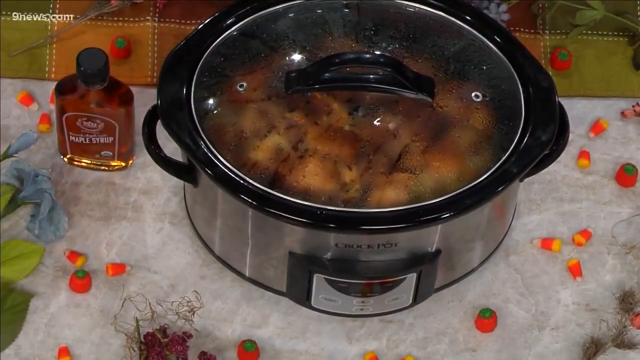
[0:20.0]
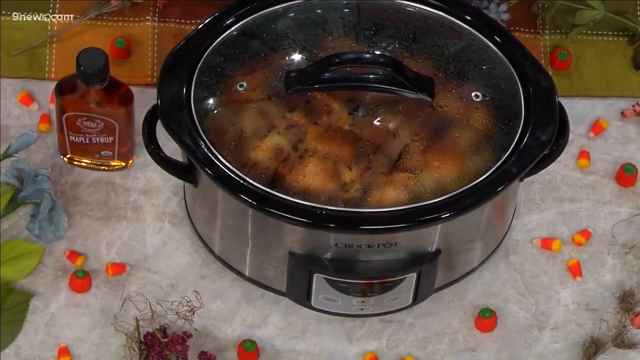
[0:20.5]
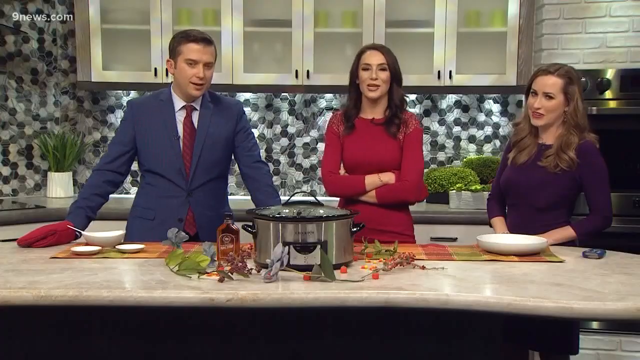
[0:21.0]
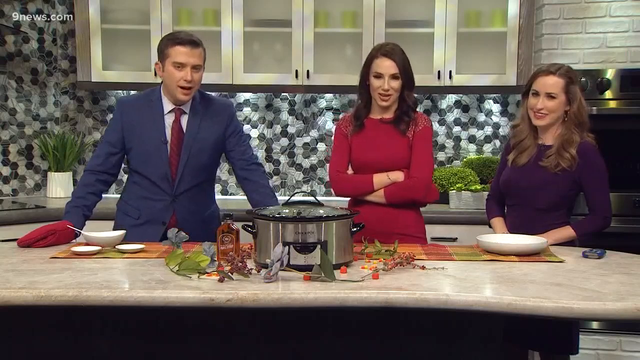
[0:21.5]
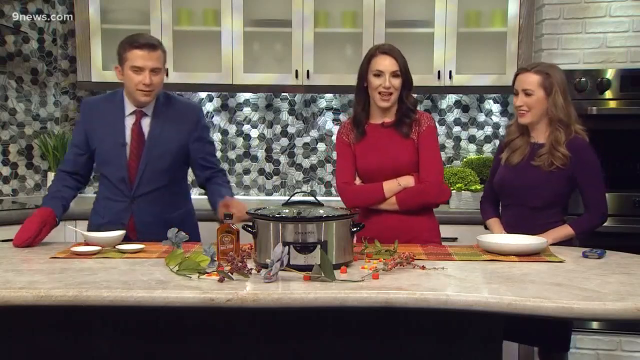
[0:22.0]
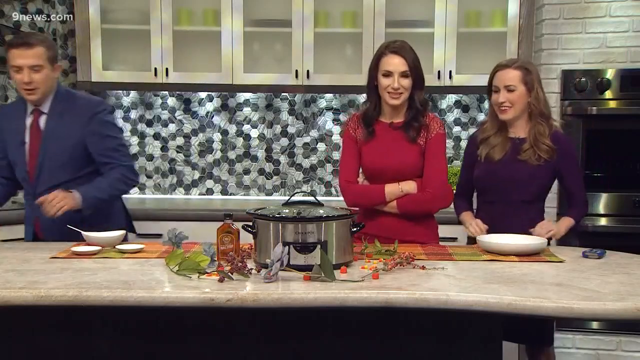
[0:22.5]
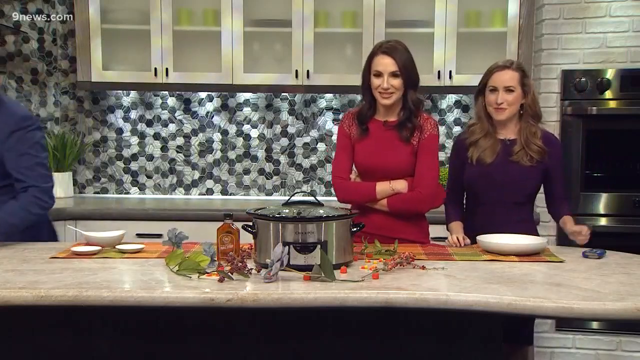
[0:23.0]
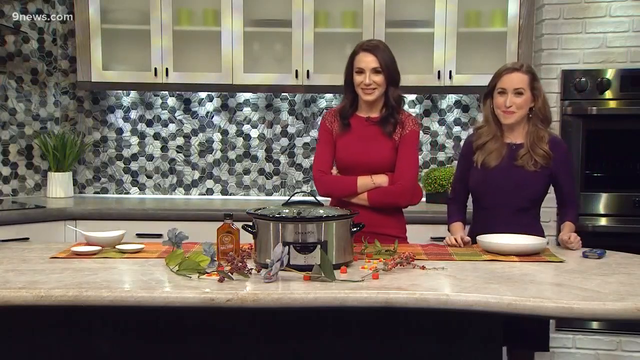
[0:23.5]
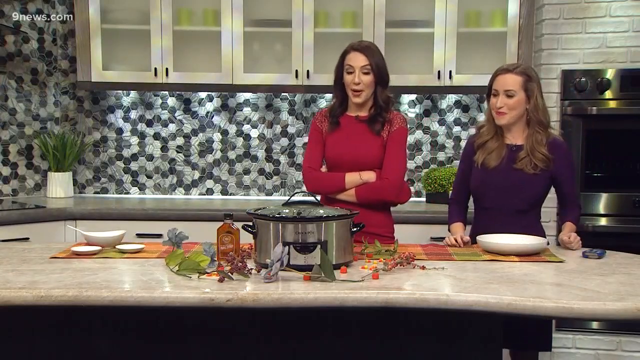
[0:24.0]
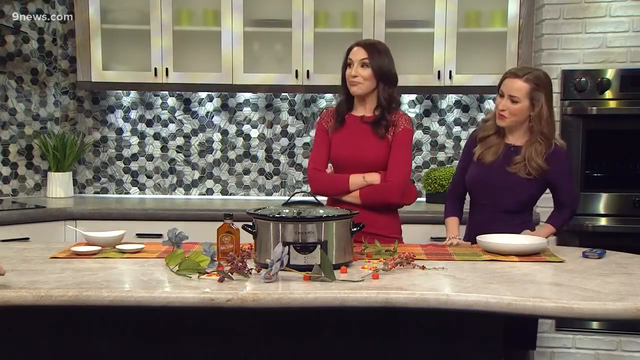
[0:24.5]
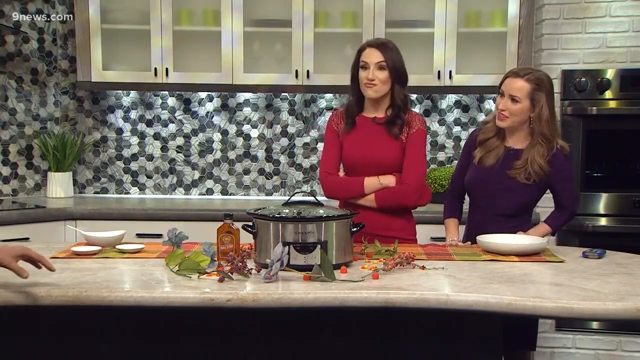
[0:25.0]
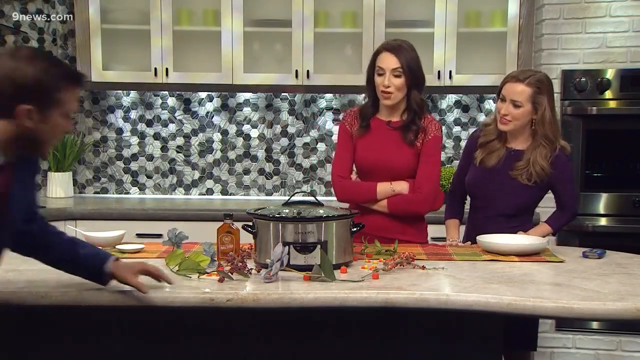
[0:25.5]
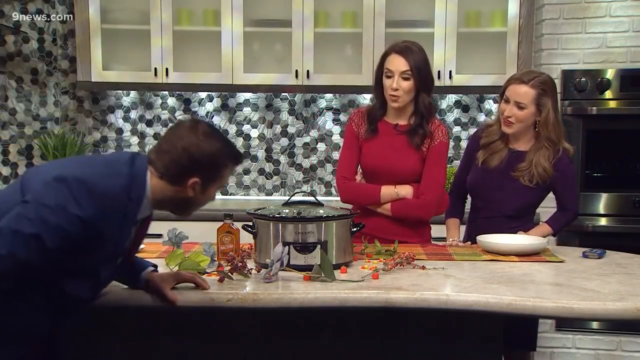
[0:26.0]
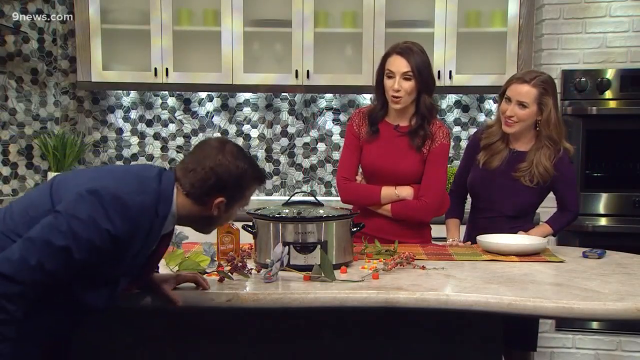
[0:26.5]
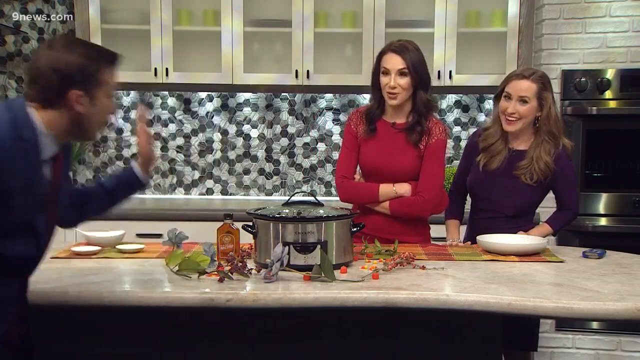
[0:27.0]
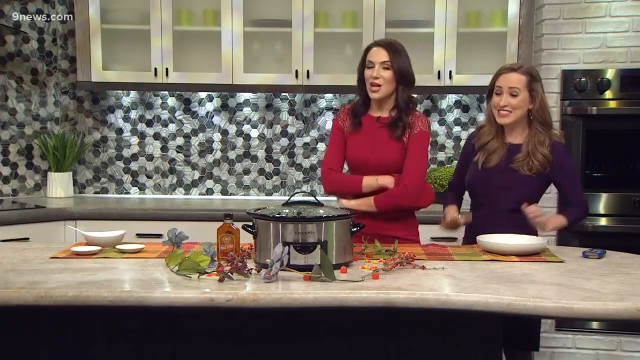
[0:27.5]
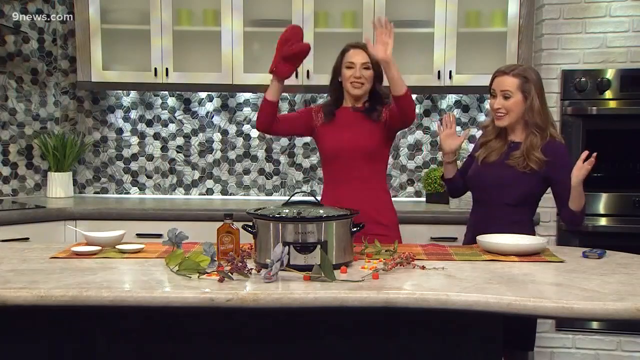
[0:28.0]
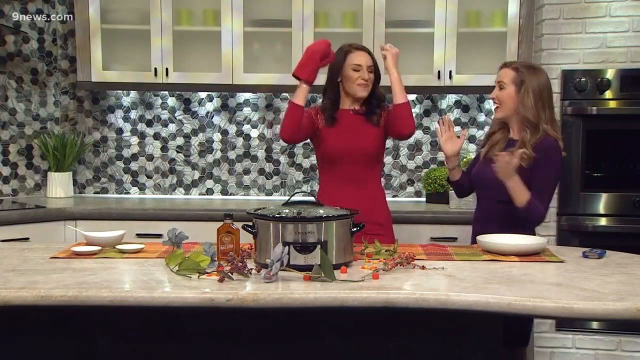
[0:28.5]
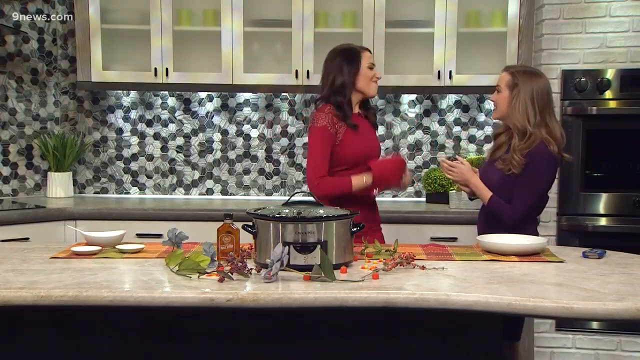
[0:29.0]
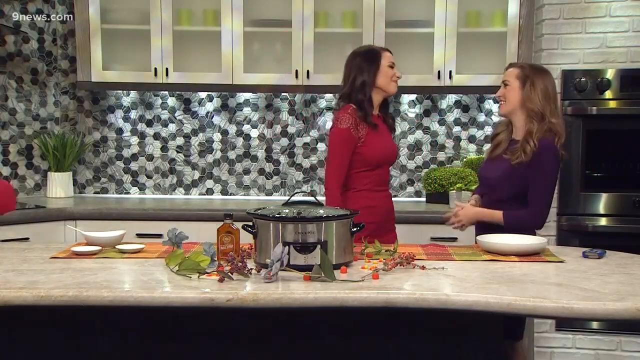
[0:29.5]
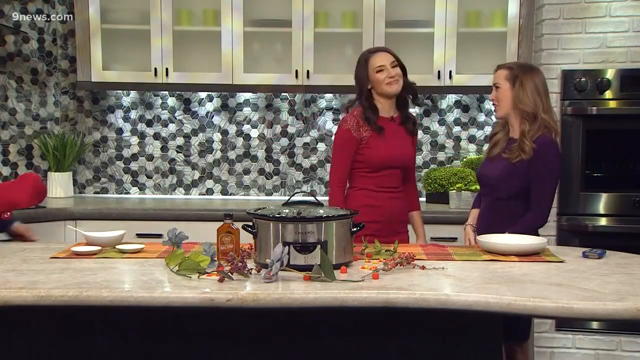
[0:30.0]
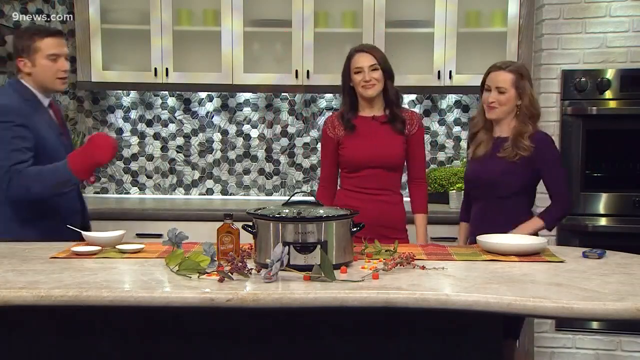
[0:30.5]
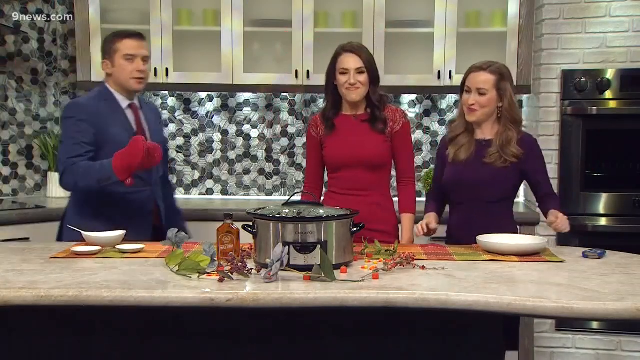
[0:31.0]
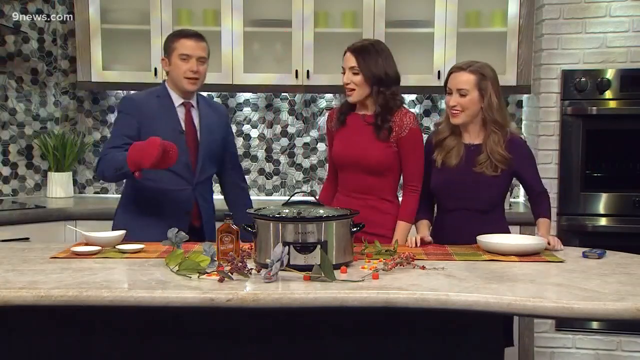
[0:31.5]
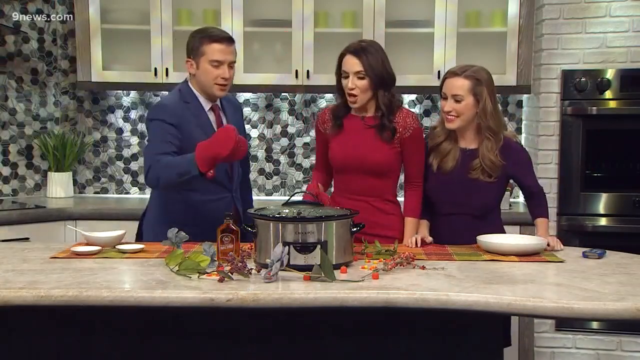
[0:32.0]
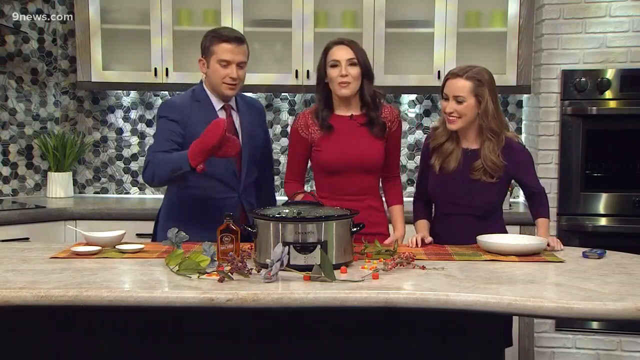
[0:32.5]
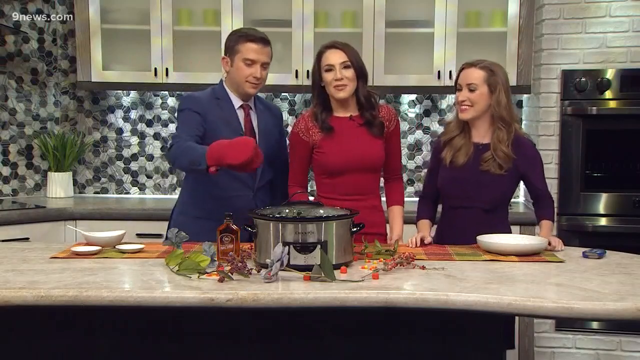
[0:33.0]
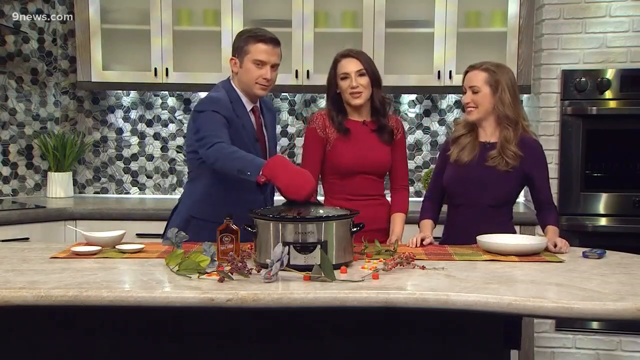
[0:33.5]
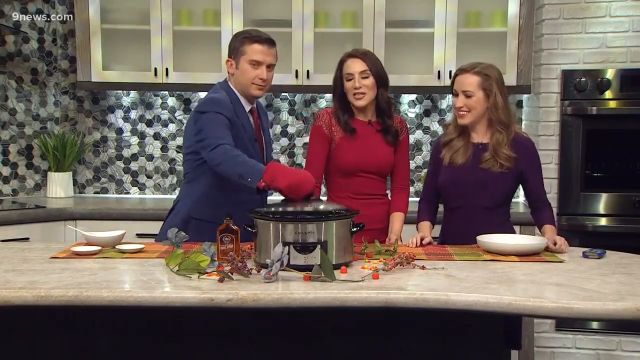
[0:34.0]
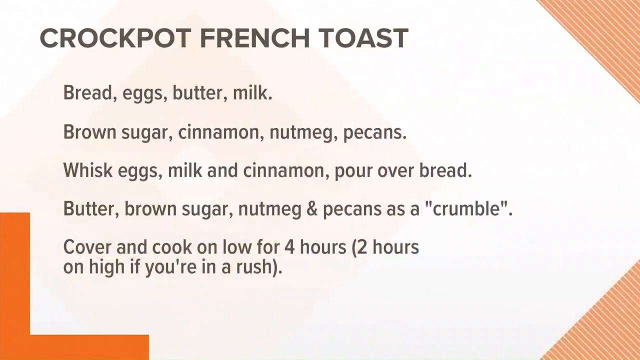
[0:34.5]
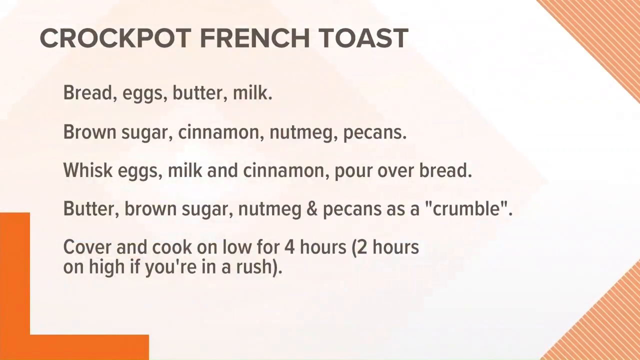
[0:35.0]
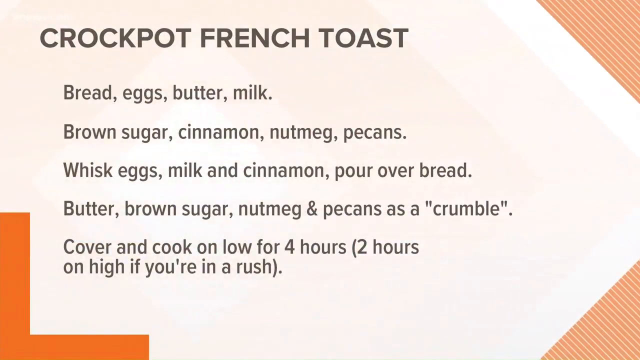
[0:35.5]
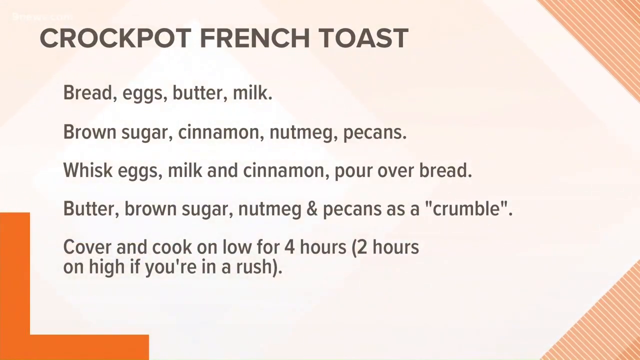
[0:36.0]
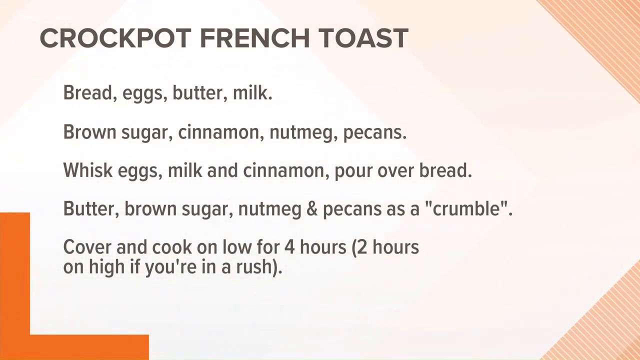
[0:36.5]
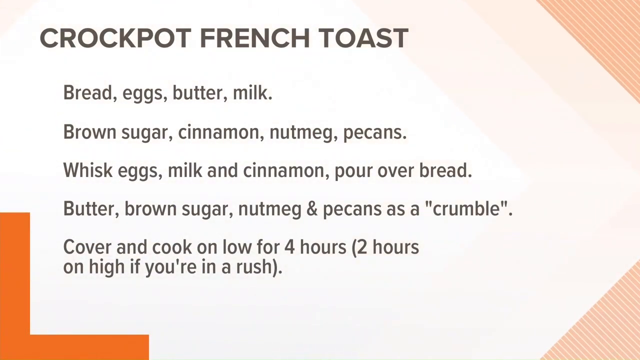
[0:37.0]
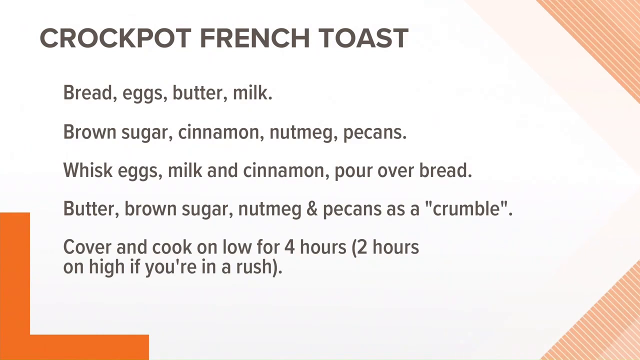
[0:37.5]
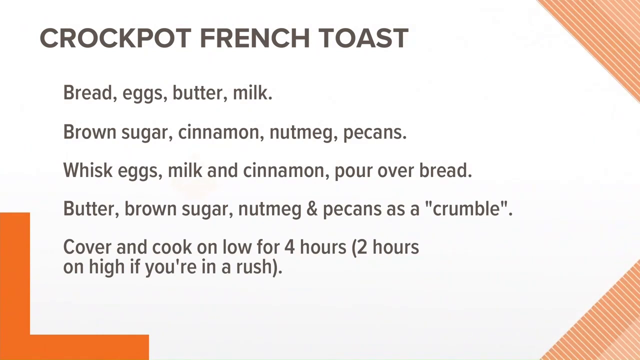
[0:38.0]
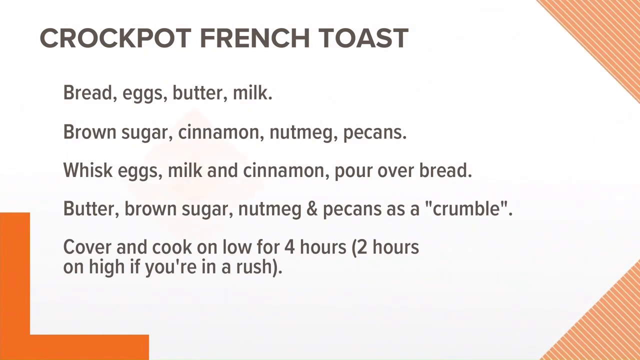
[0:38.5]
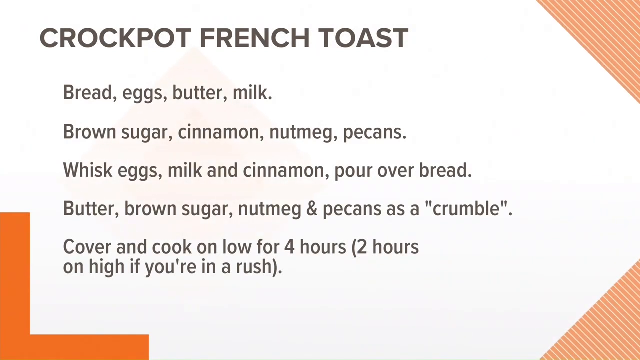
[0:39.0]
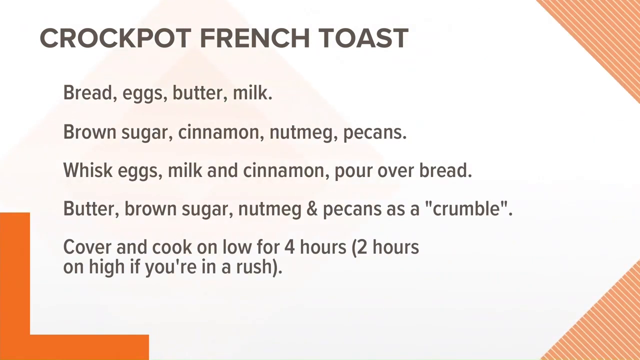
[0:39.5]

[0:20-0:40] A wider view of the kitchen shows three people standing behind the table and the pot. A lady wears a maroon dress and a glove on her left hand, another person wears a blue suit and is well-groomed, and another lady is on the right side of the frame. They appear to be talking, engaging and laughing. The man comes to the front of the counter to check something, then goes back to stand with the ladies. A cloth is taken and the pot is opened. Behind them are upper cupboards with glass in the middle, and the walls are white and grey. The screen then becomes covered in text reading "Crockpot French Toast", with ingredients listed below, such as eggs, milk and sugar, and a cooking duration of 2hrs.